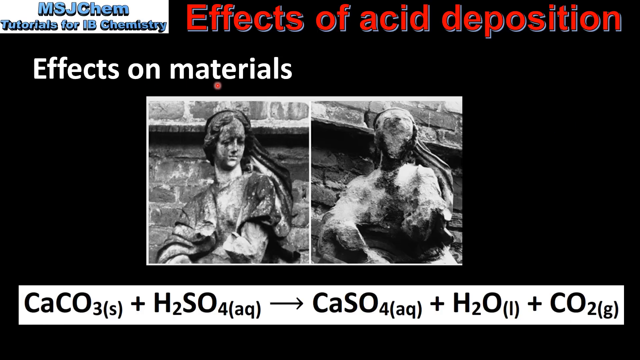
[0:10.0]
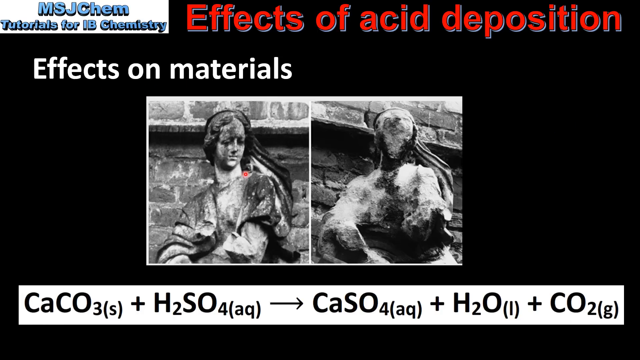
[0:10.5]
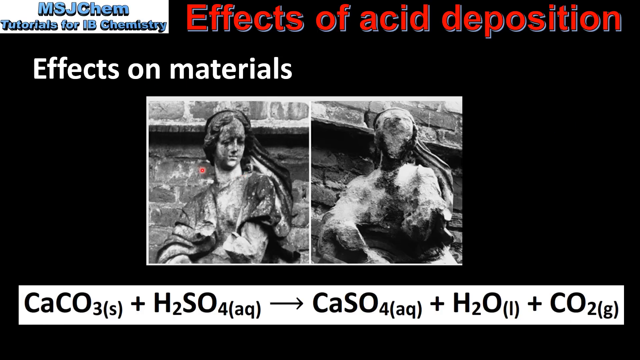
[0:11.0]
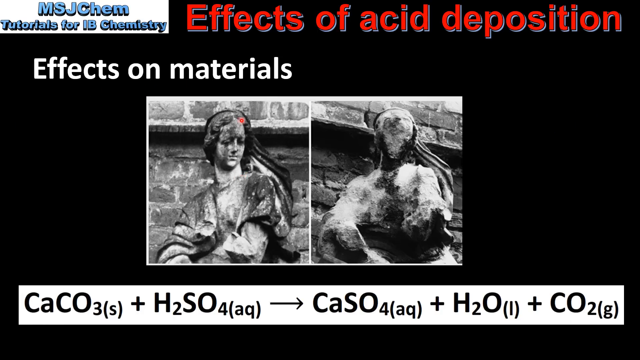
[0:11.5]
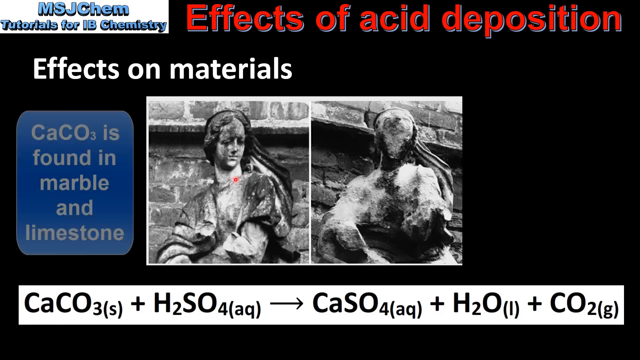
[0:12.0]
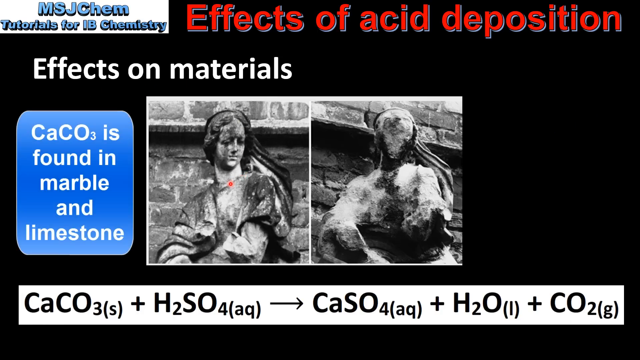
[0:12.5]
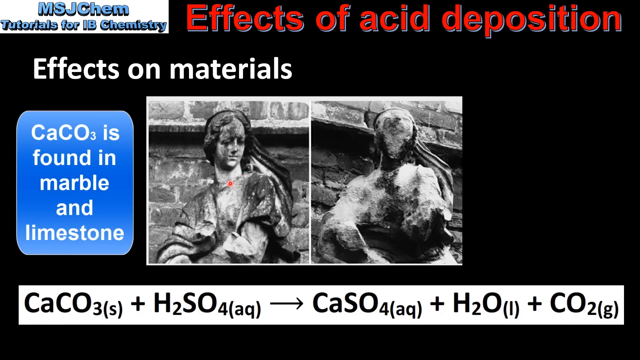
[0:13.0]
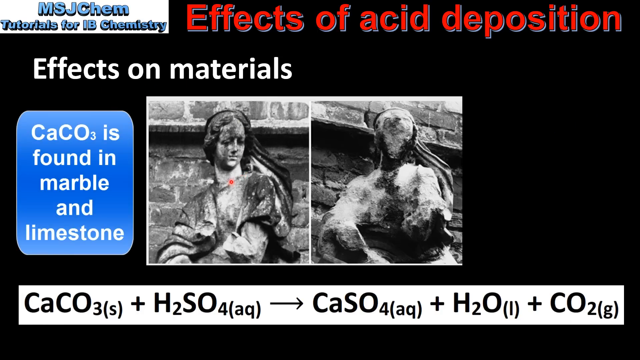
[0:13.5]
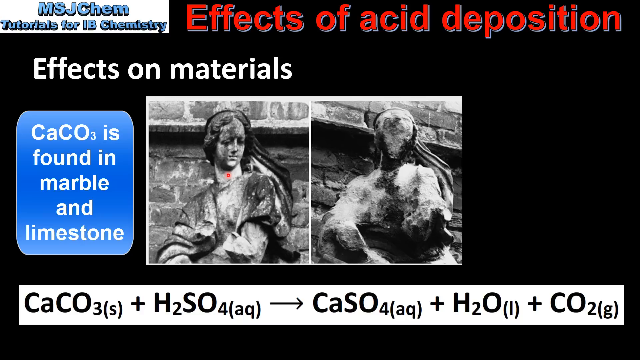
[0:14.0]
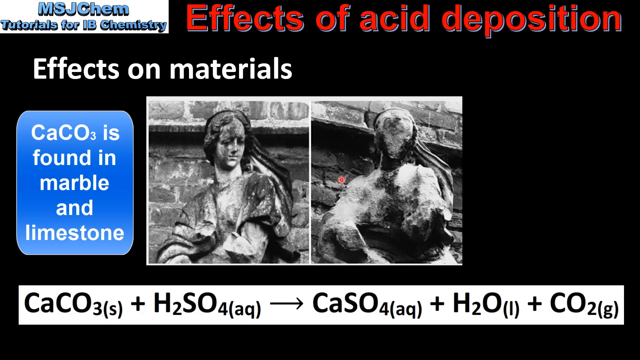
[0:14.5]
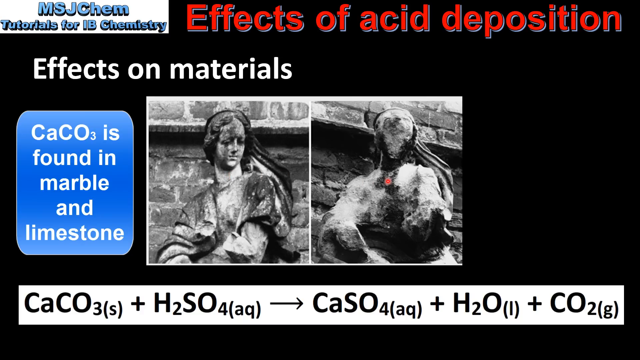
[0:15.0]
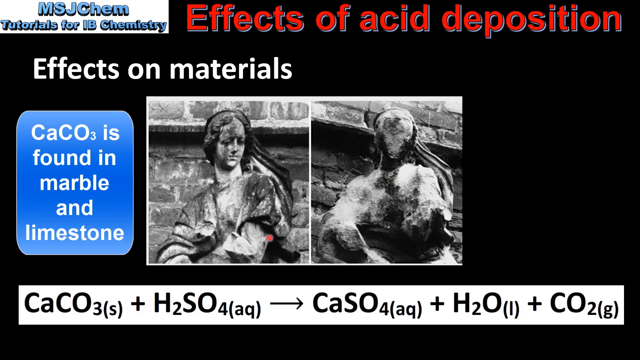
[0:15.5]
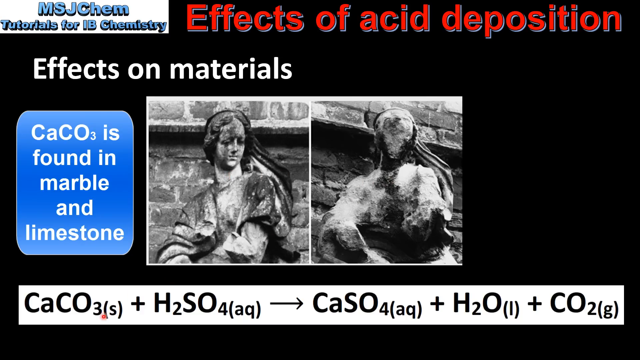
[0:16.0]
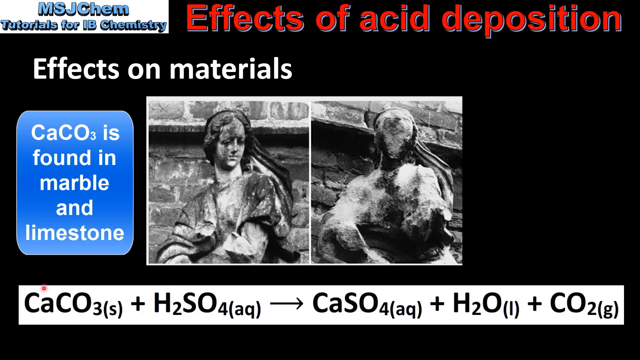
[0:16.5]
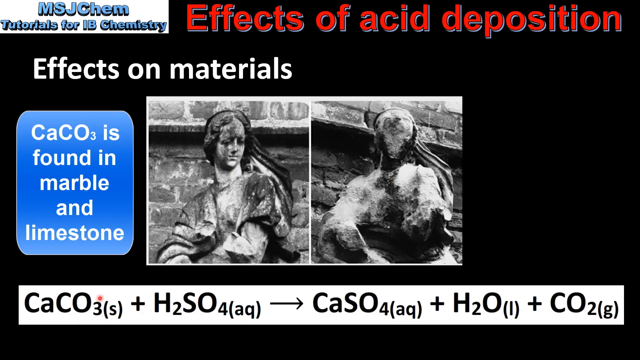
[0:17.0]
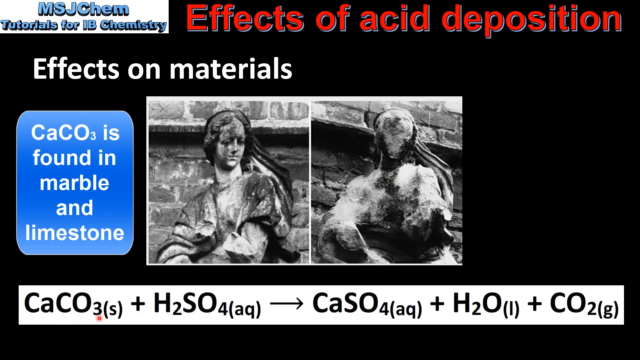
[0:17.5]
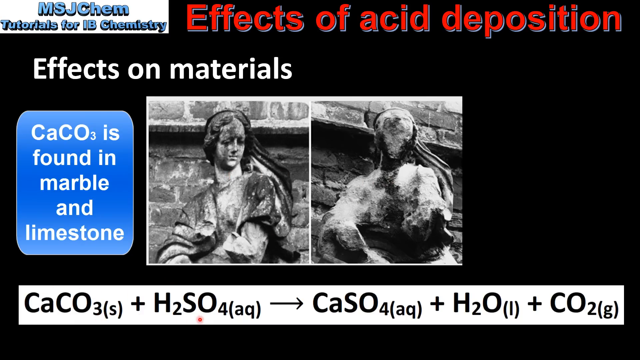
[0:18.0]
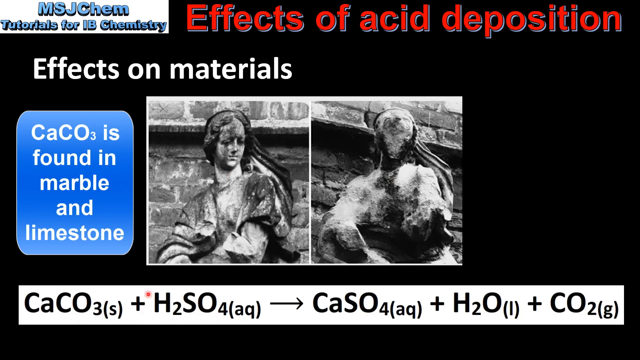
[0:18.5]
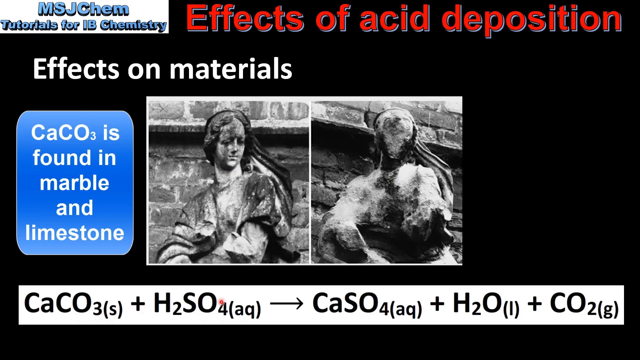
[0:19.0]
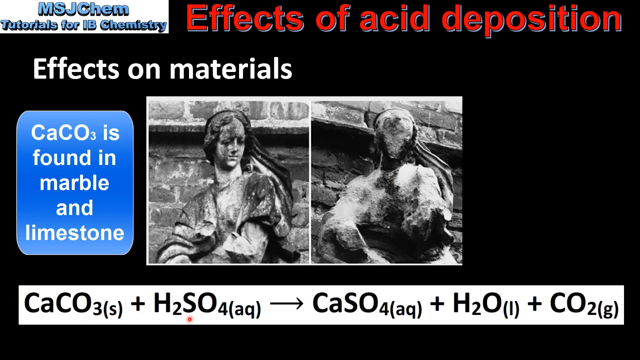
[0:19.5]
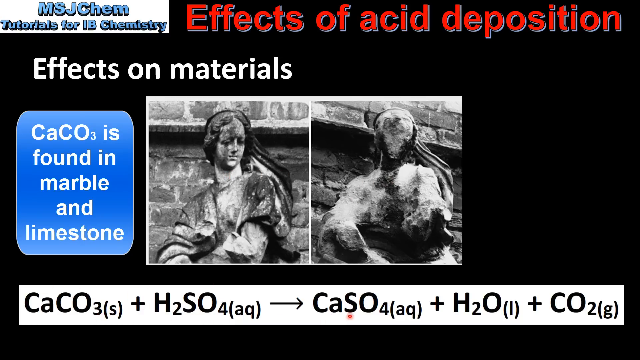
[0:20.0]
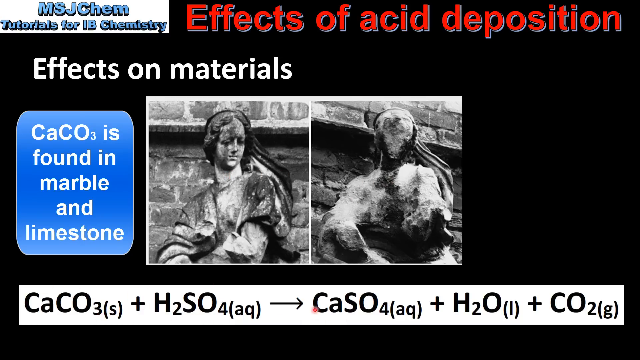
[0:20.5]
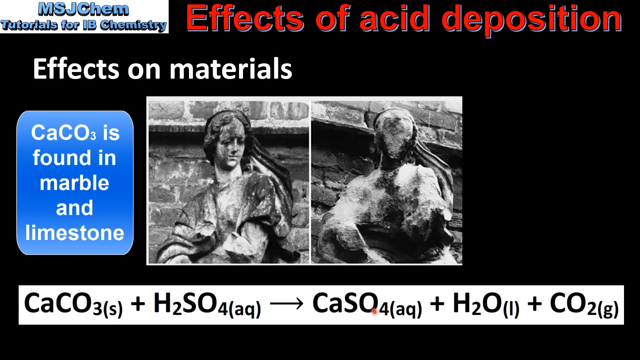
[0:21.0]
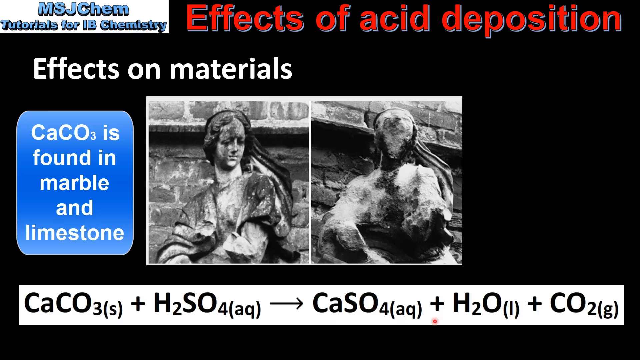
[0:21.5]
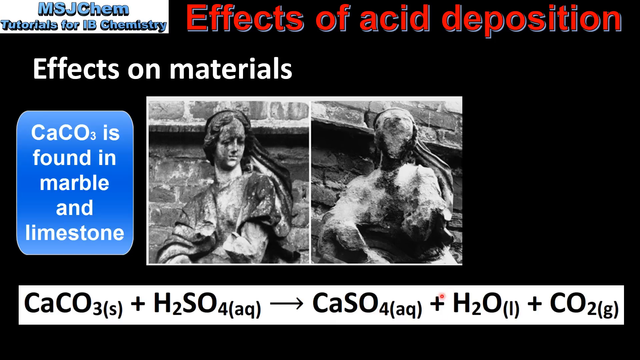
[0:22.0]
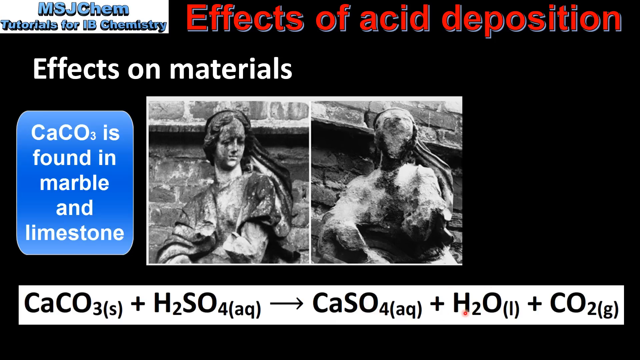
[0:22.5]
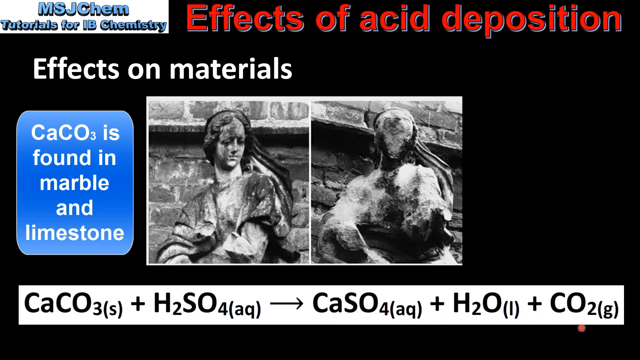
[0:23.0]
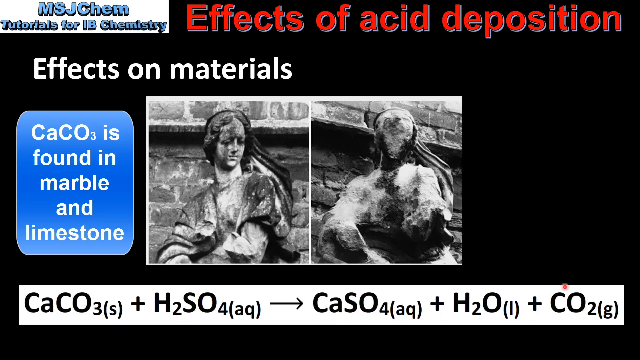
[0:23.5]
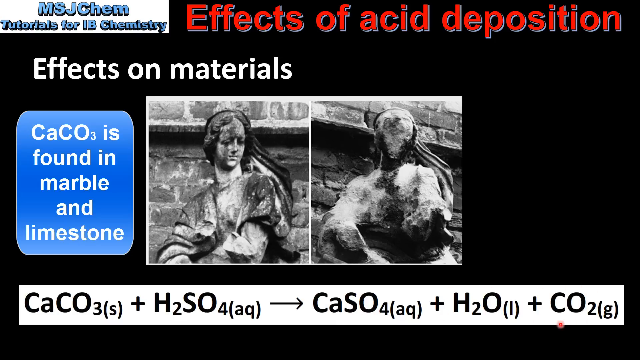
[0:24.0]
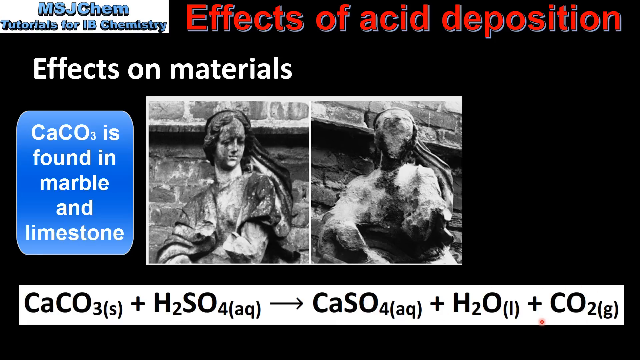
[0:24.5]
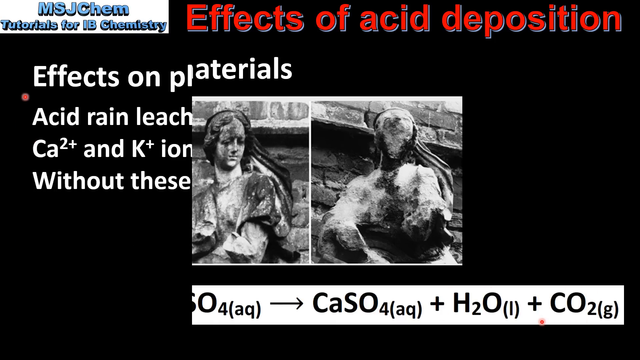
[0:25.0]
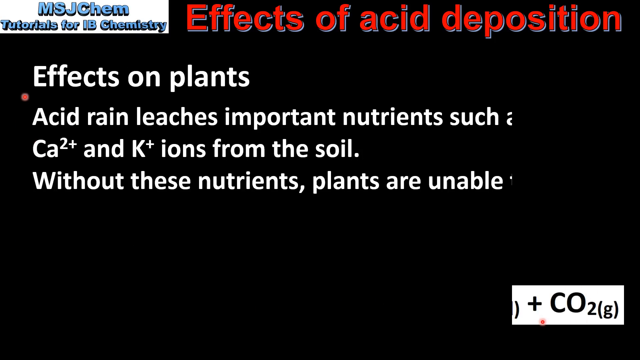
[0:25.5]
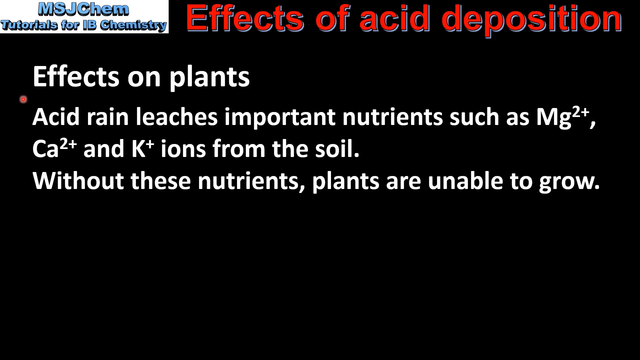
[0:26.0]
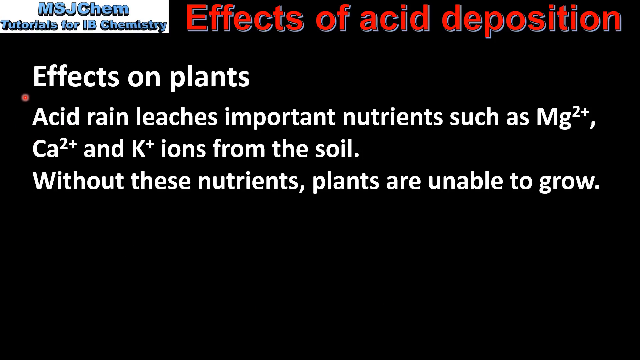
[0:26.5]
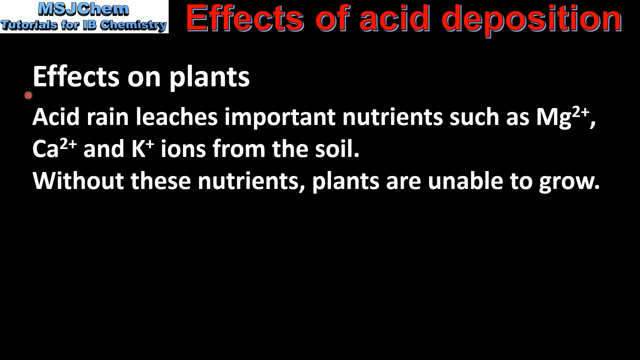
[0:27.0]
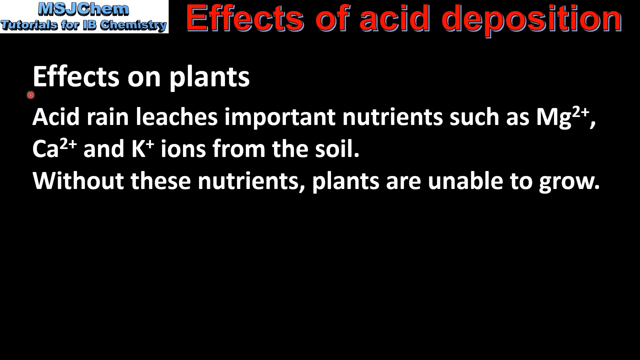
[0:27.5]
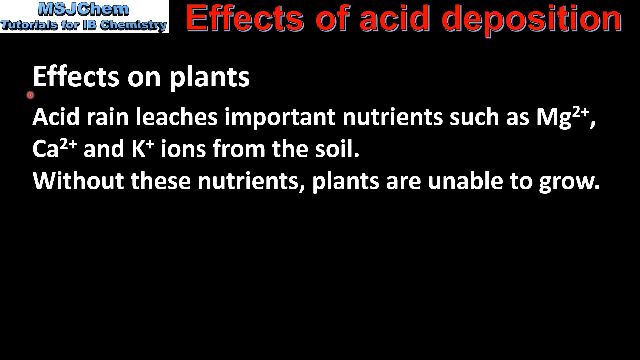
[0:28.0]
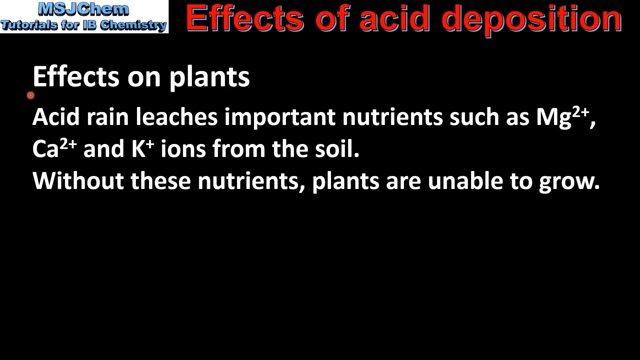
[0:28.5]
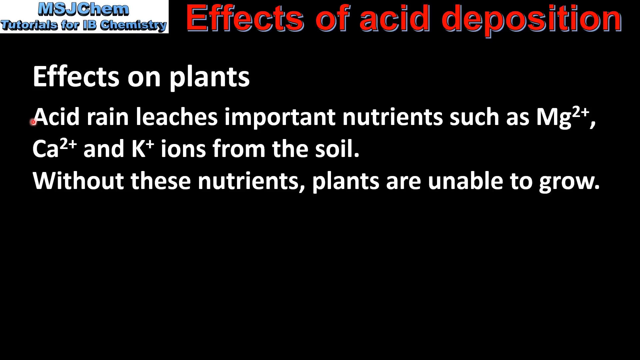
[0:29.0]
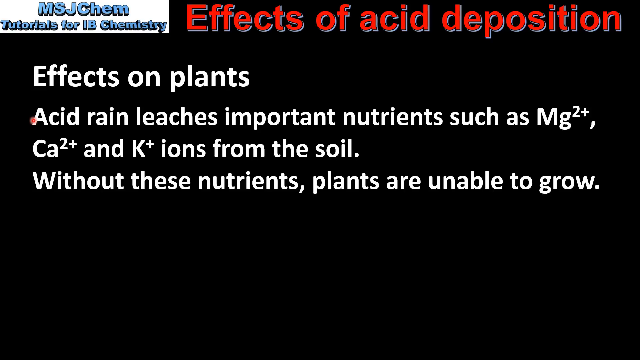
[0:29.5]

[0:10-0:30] The slide is titled "Effect of acid deposition and its effect on materials" in red font on a black background. In the middle is an image of a statue containing a before-and-after picture that shows the statue withered and weathered by acid or by the elements. On the left side, facial features such as a nose, eyes and chin can be made out; on the right side there is just a somewhat smooth surface. Text reads "CaCO3 is found in marble and limestone," and at the bottom of the slide is a big, long chemical formula reading CaCO3 plus H2SO4 gives CaSO4 plus H2O plus CO2. The cursor moves through these elements as if explaining what each one is. The slide has a black background, and the headers look like PowerPoint WordArt.